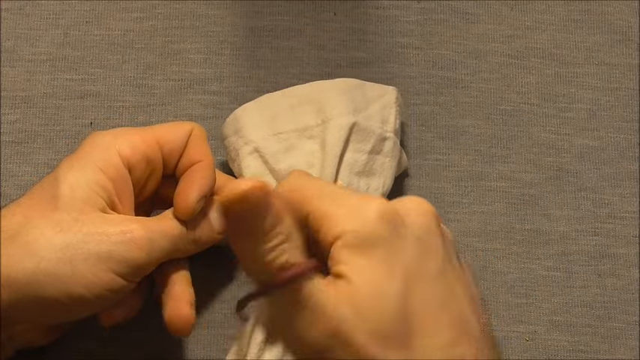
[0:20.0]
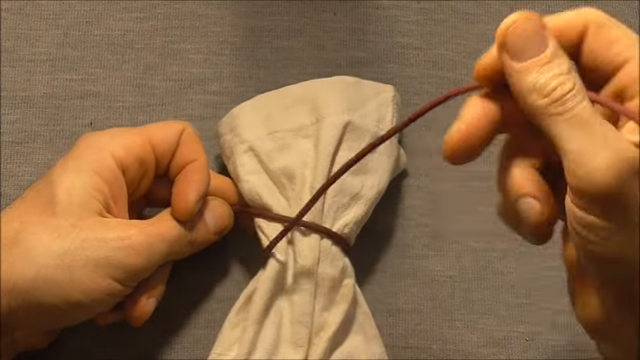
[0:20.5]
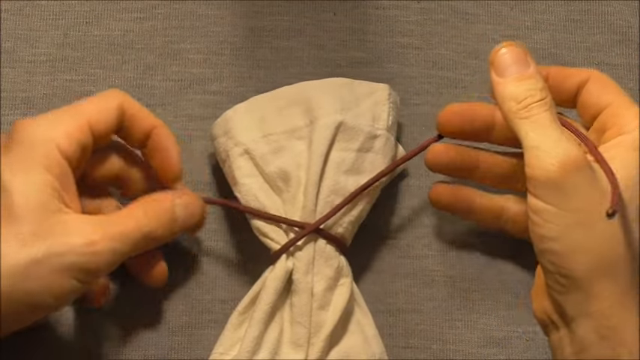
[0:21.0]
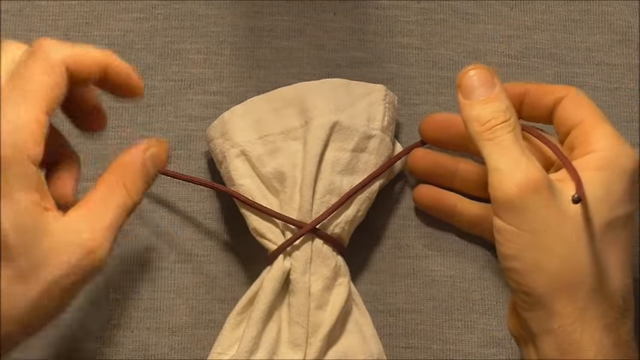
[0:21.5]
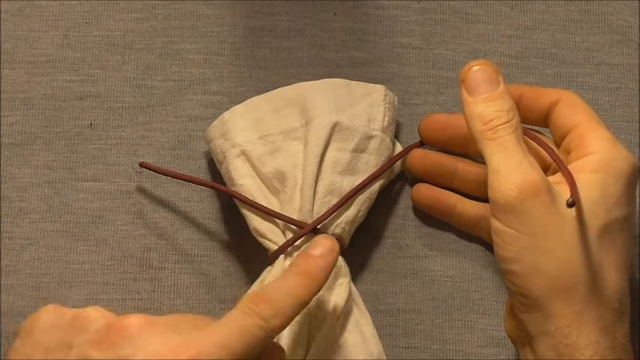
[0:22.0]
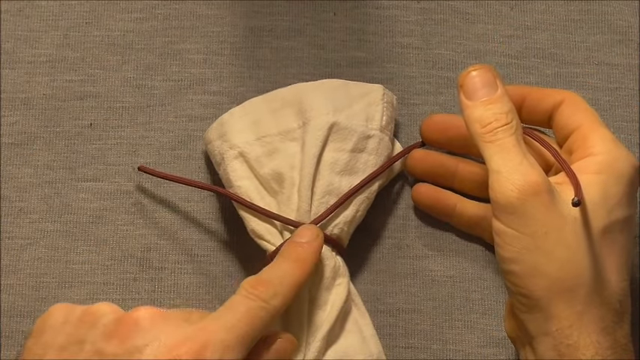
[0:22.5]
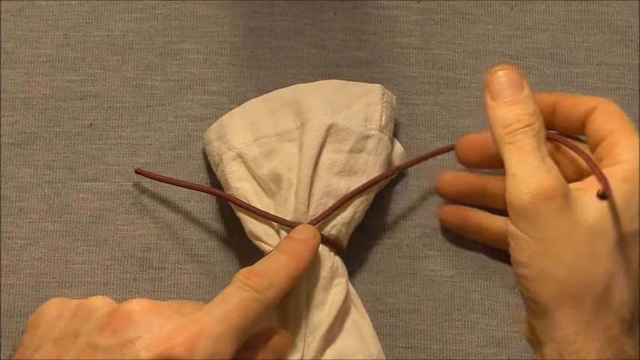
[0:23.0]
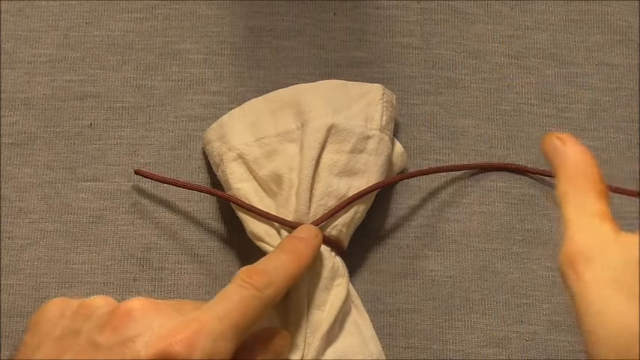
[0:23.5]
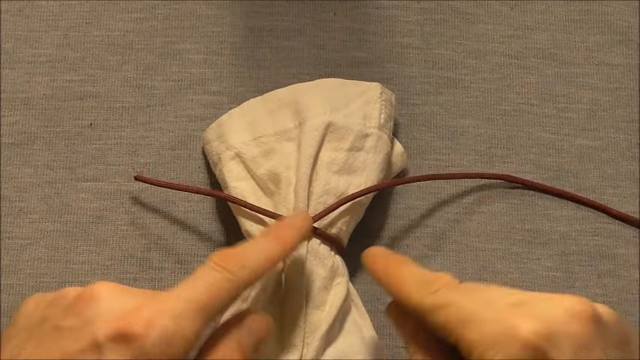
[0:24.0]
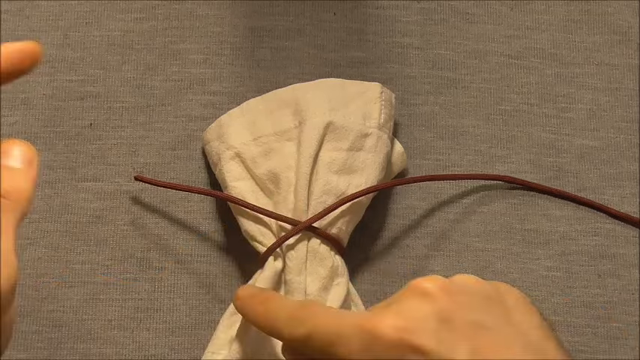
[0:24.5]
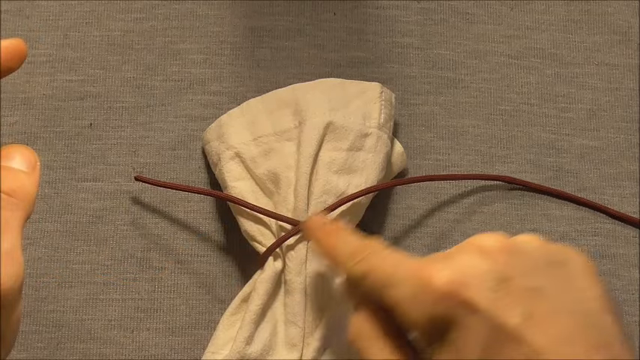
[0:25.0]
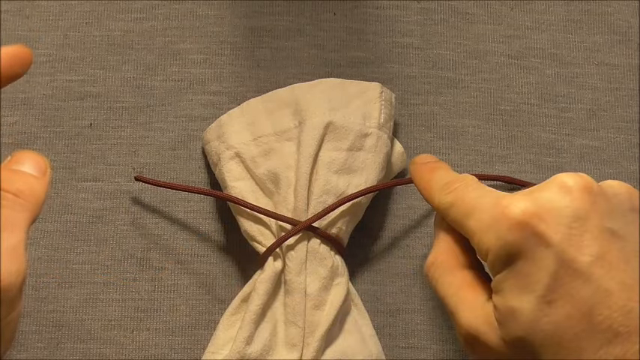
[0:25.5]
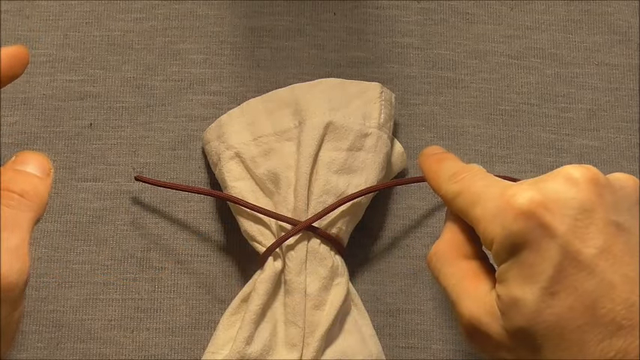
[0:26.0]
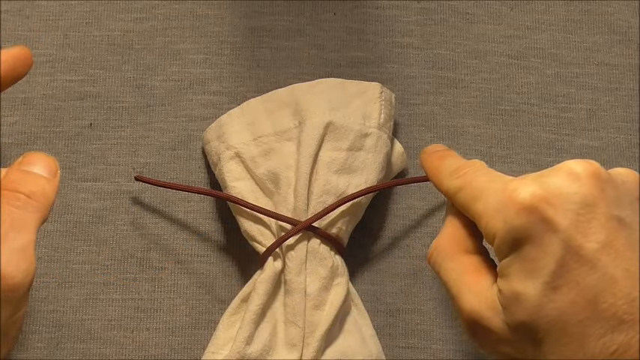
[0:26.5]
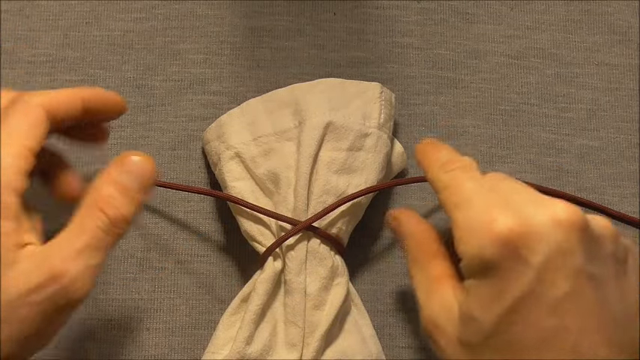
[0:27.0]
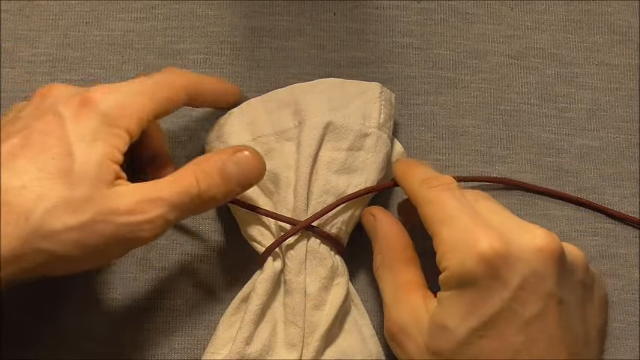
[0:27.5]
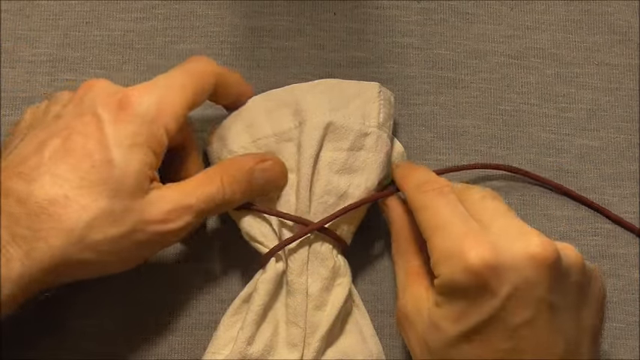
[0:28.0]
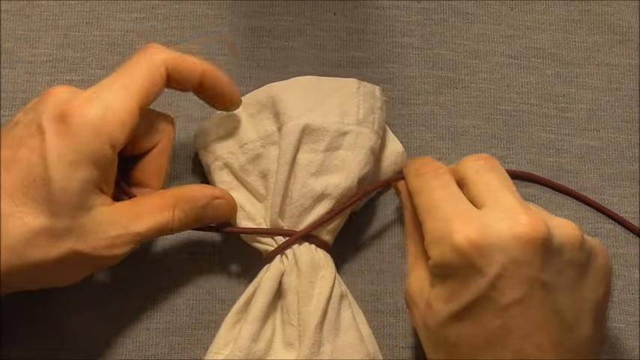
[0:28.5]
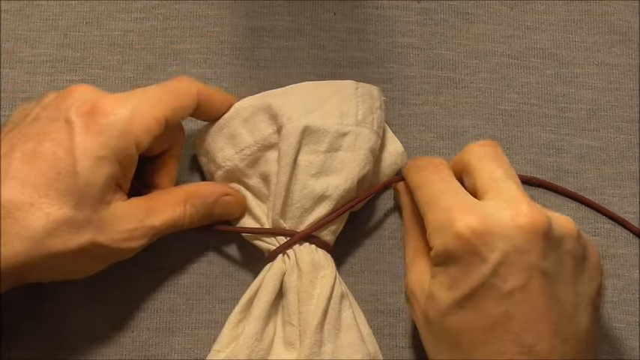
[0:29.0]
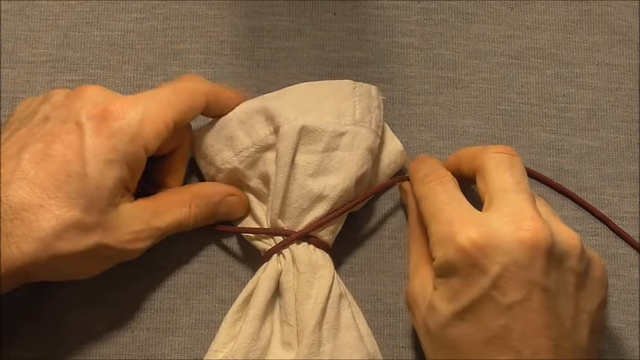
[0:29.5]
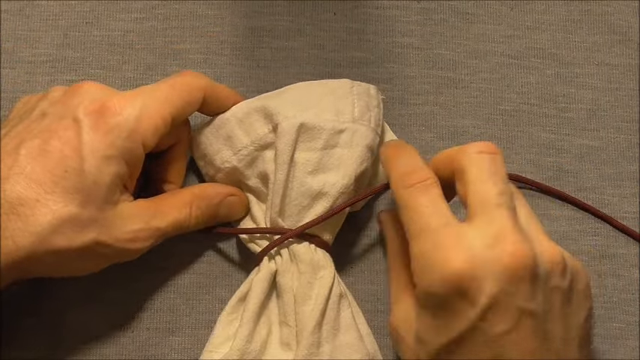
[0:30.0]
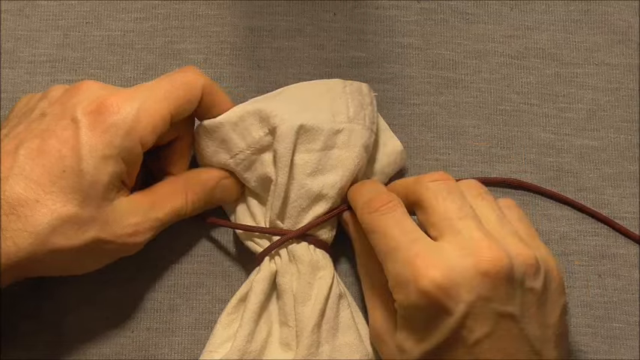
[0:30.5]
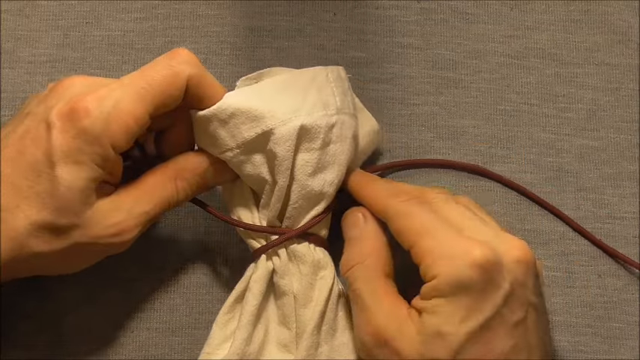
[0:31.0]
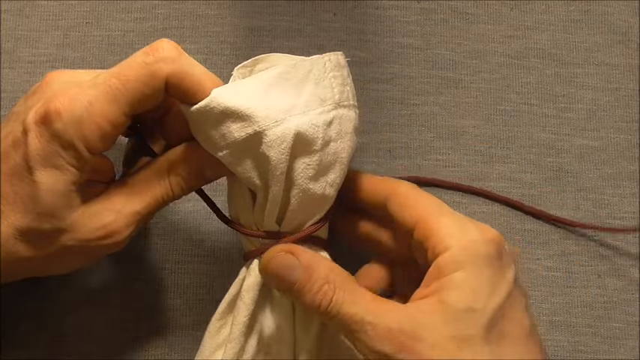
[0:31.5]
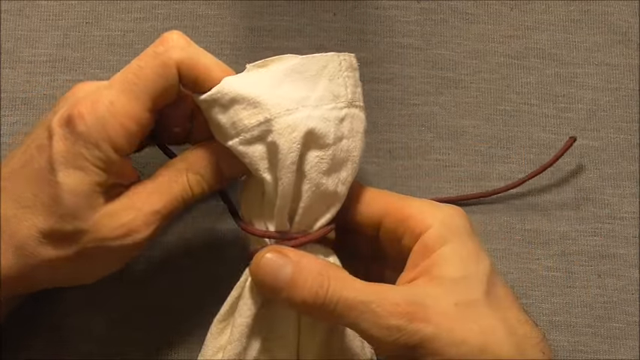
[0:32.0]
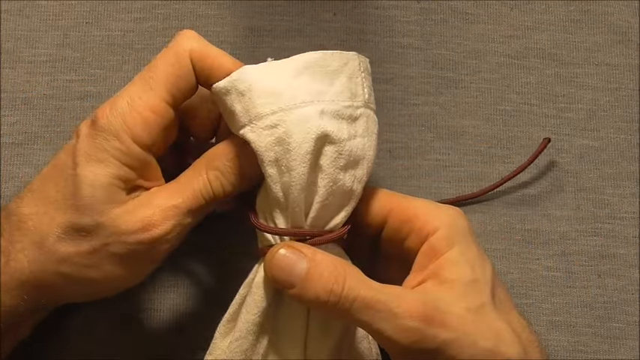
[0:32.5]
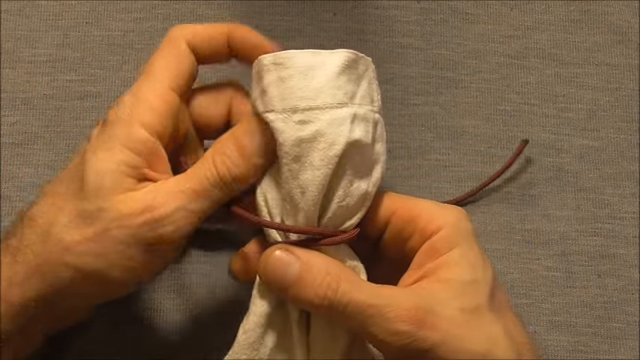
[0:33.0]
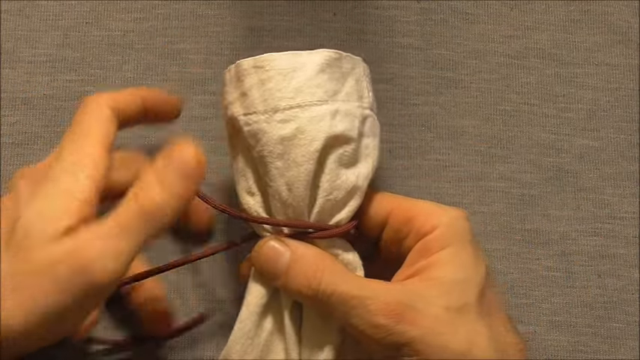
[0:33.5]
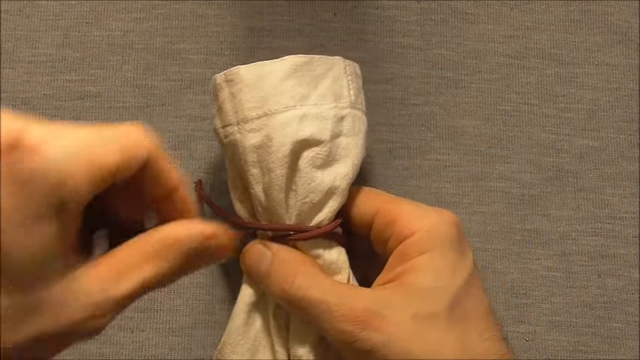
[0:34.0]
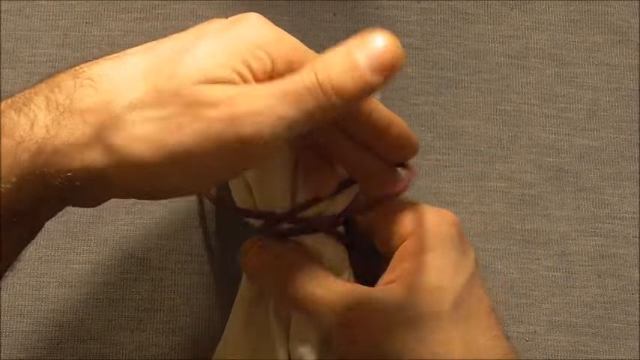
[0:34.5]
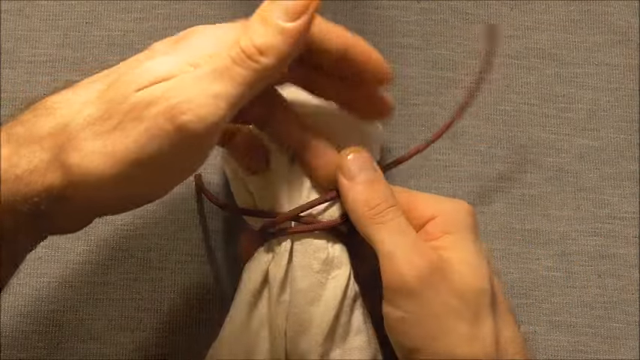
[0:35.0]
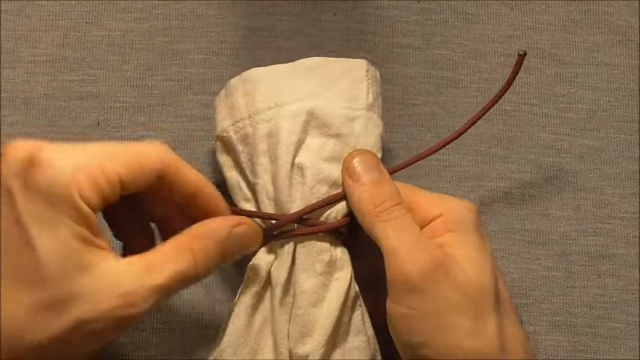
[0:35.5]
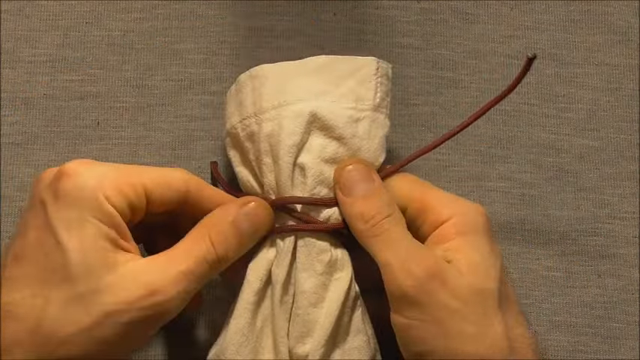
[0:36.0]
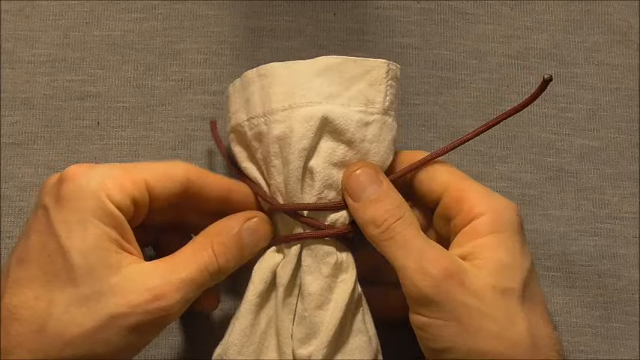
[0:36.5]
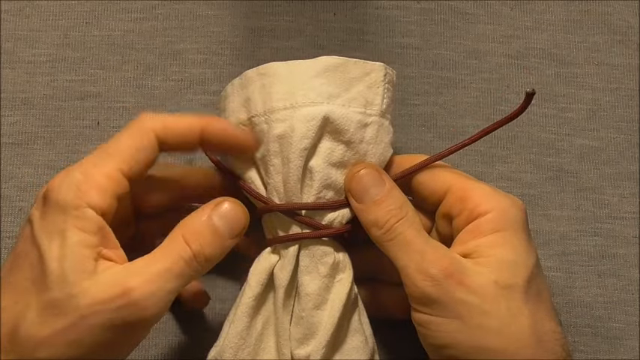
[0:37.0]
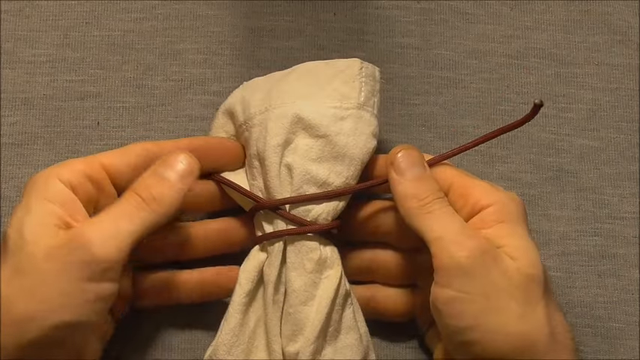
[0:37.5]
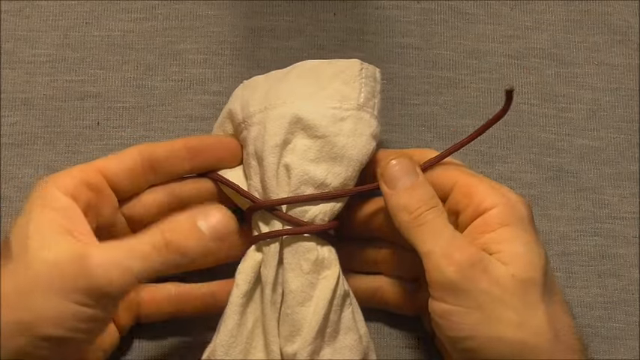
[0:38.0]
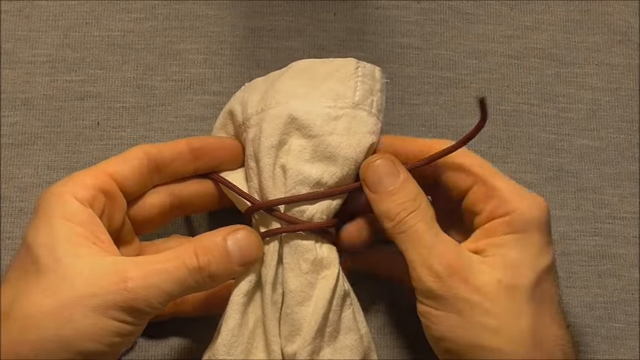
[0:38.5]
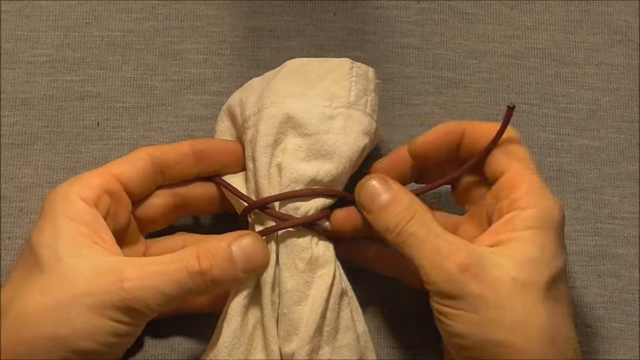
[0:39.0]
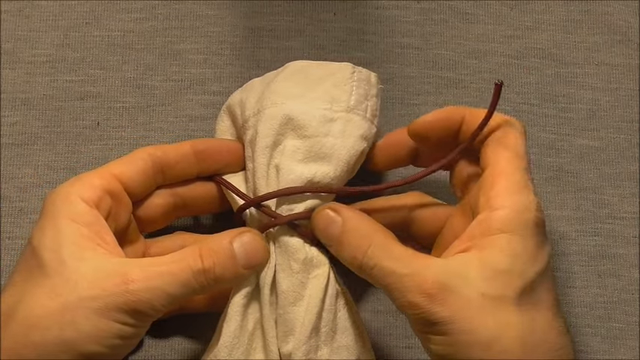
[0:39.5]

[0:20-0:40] Two hands appear against a dark brick background, with the string wrapped around the right thumb and the piece of cloth still there. The hands, which look like those of an adult male with light skin, work on tying the brown string around the beige piece of cloth. The string forms an X shape, and the person uses both hands to tie it around; the X goes around the cloth, creating what looks like two X shapes. The string kind of looks like it is made of leather. It is pulled around the cloth so a knot can be tied.